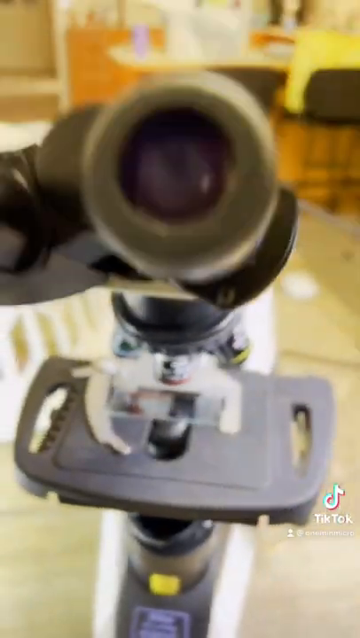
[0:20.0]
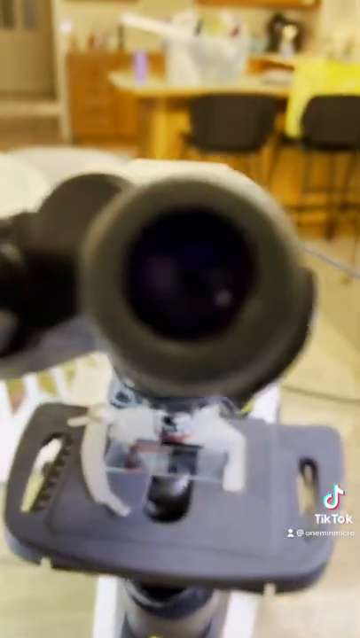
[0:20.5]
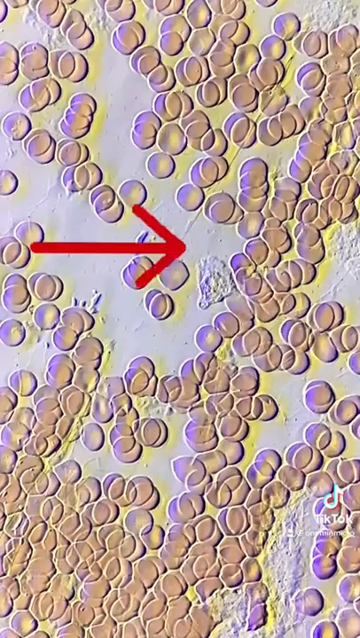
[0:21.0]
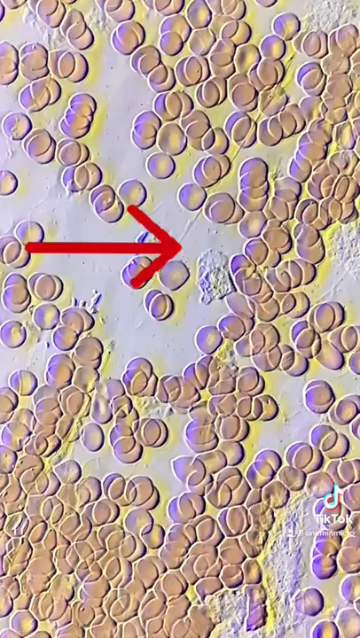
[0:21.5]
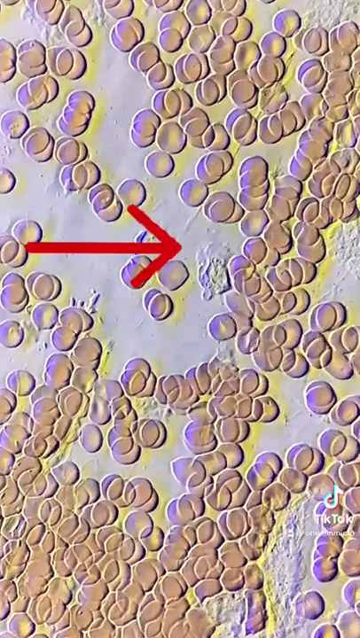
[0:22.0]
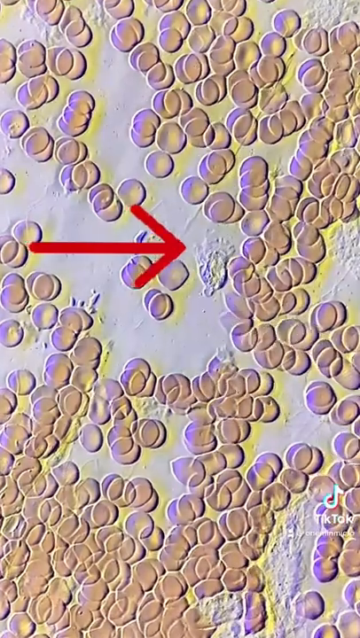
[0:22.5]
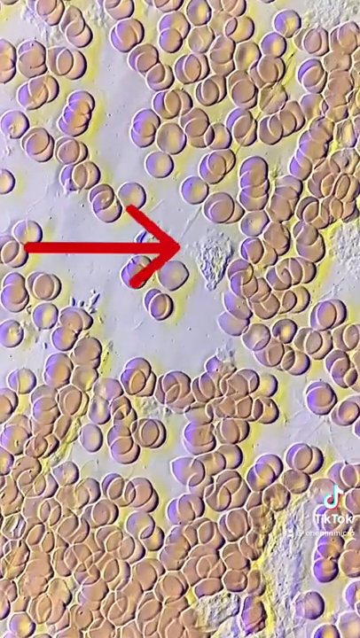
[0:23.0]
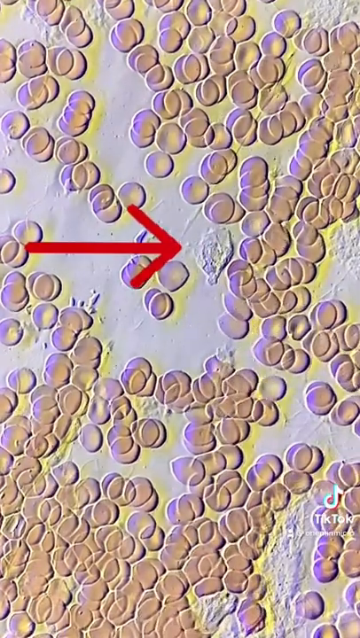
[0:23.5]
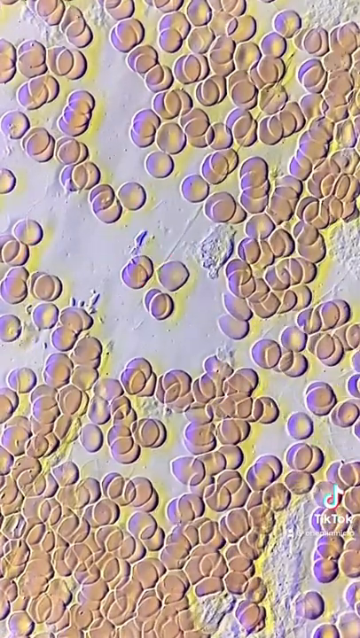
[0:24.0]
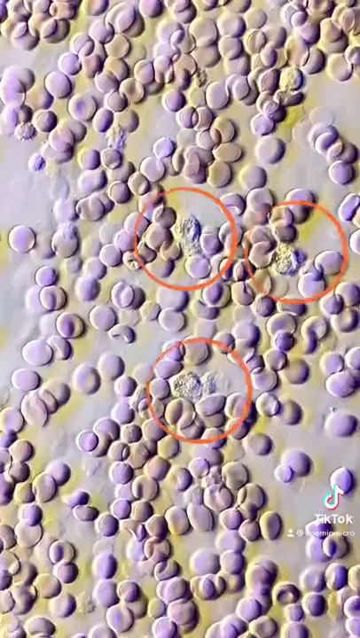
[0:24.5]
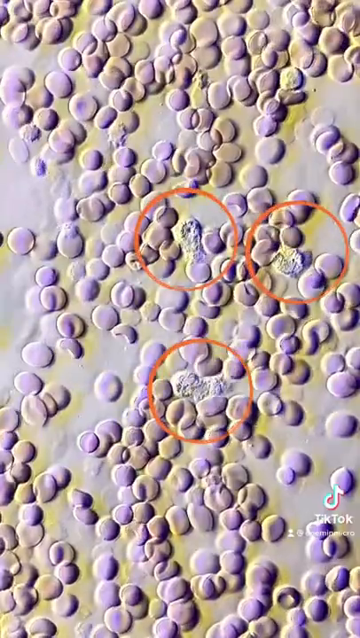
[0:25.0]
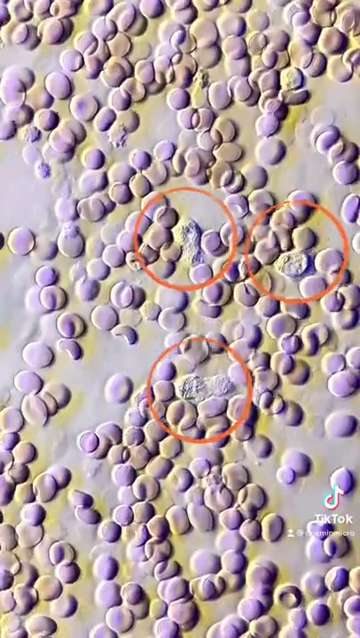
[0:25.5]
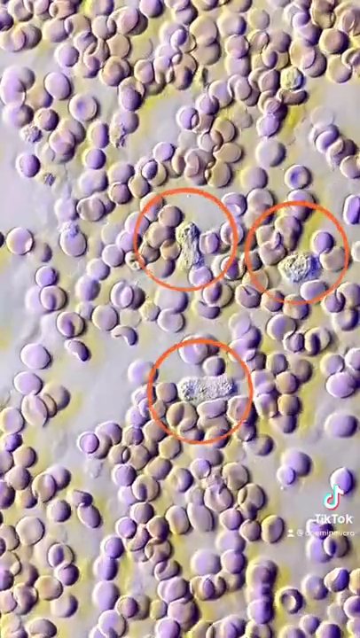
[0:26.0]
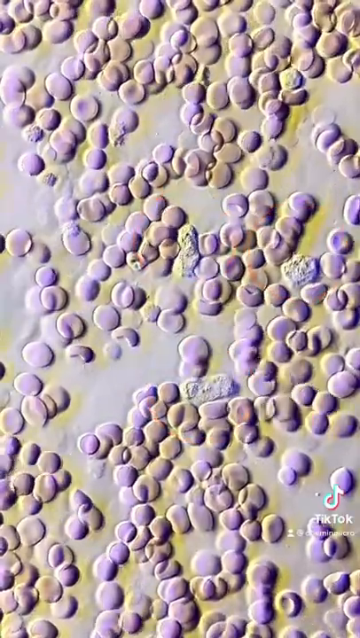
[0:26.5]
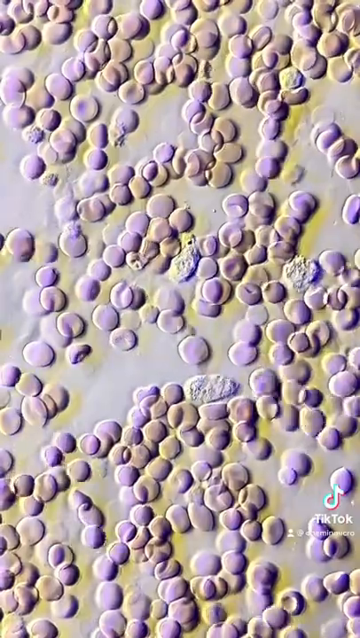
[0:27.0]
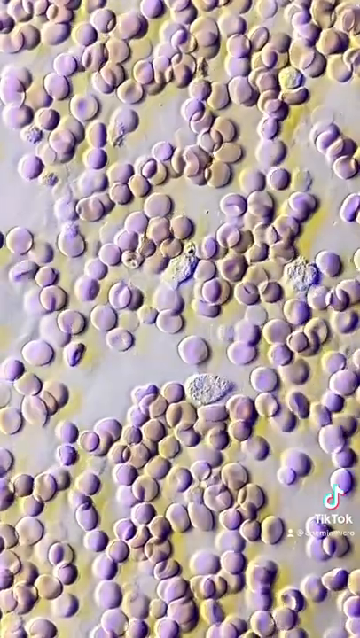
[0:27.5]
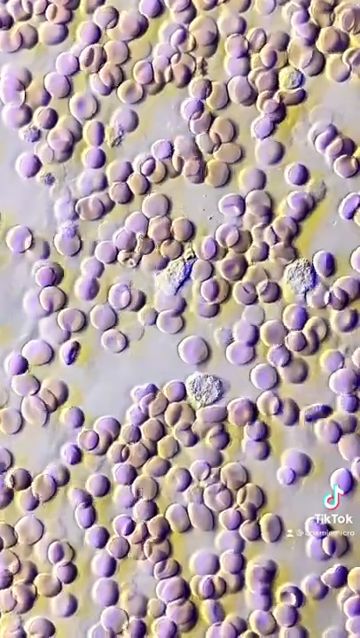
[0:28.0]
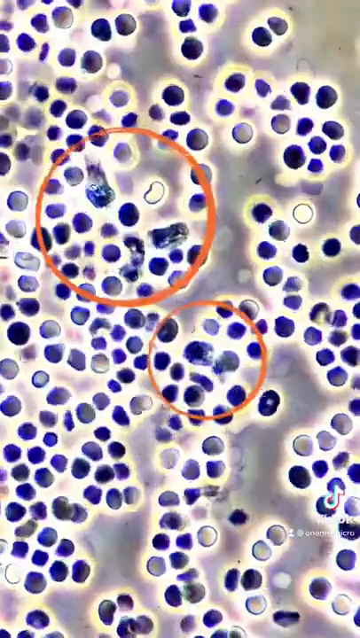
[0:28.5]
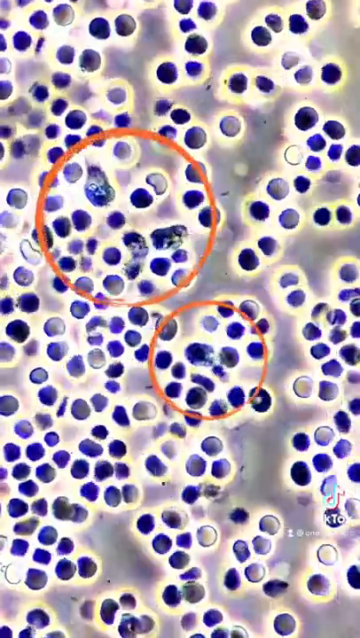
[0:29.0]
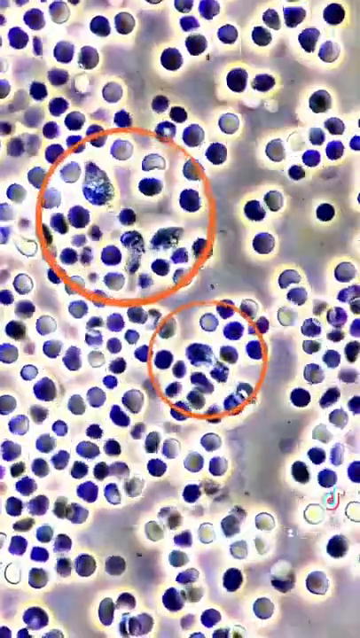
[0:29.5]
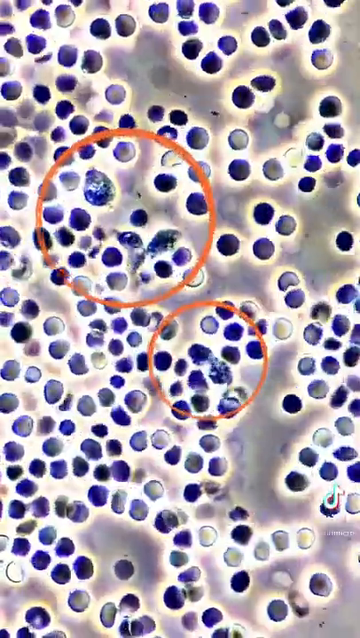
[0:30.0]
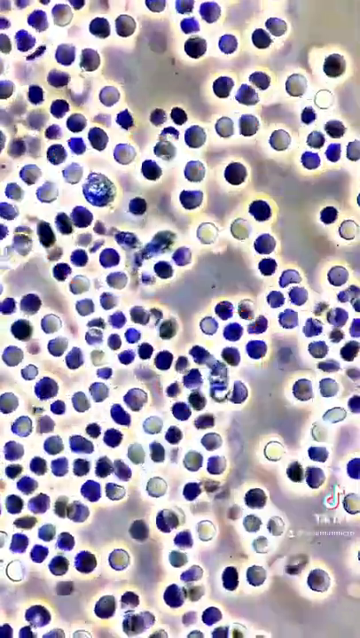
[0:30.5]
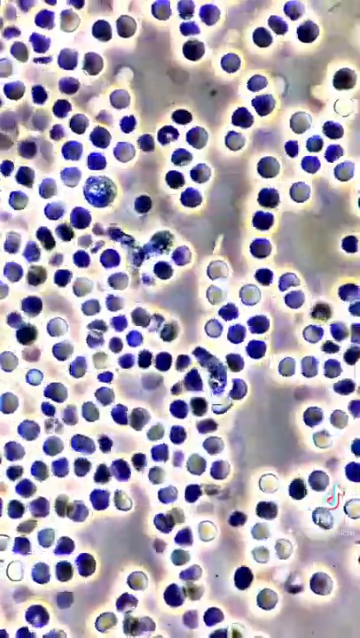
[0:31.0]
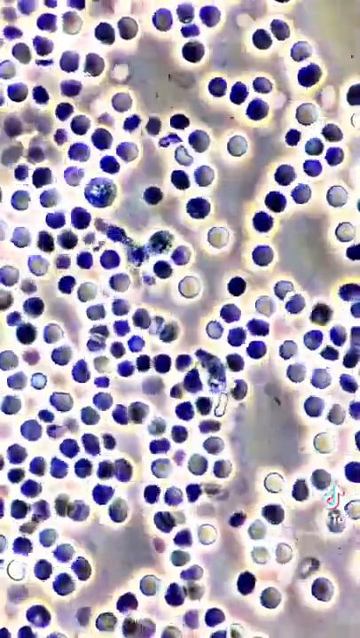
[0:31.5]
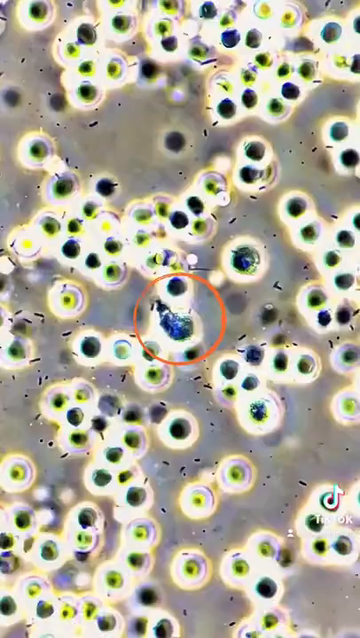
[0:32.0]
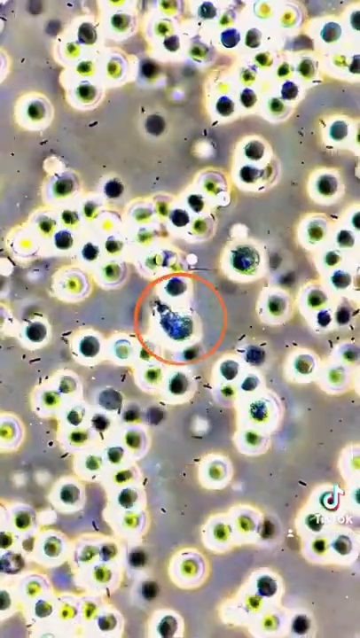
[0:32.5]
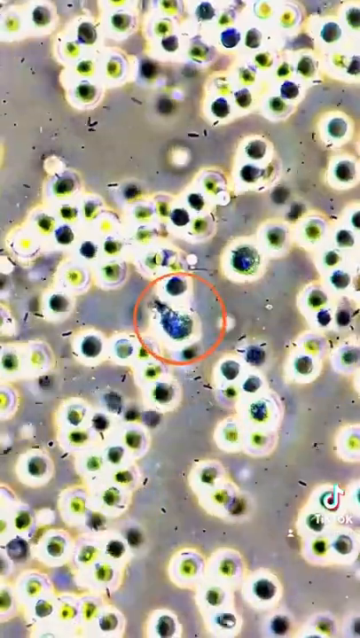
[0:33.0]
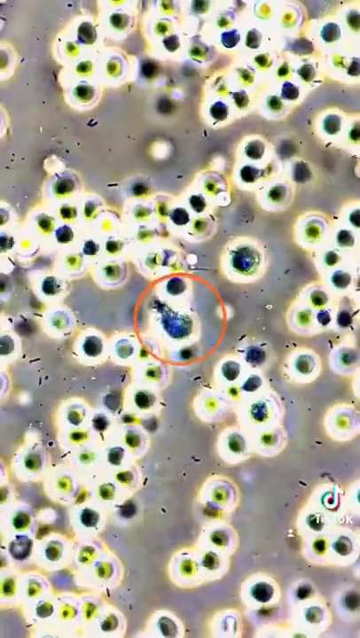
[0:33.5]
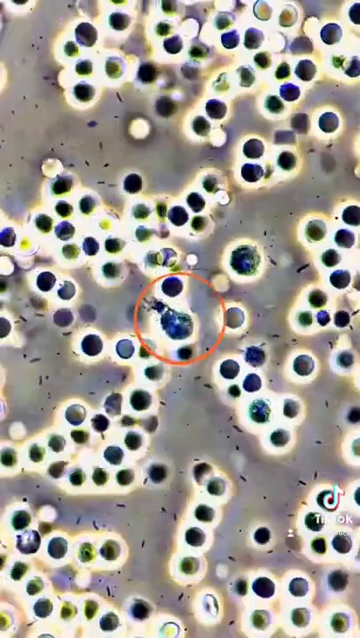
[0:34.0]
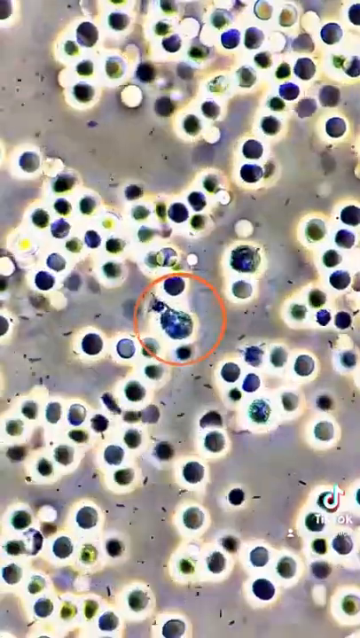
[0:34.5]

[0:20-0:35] A man looks through a microscope, and many cells are seen moving around. The video keeps cutting to different cells in different colors. Some images have parts of the moving cells marked: a red arrow points to one cell, another image has three red circles, another two red circles, and one has a single red circle. The apparent cells are brown, then pink, then navy blue, then yellow and black. The video cuts to the camera looking through the microscope lens, then back to the cells. The cells seem to be swimming in some kind of liquid, and they are all different colors, with many red markings indicating certain cells.